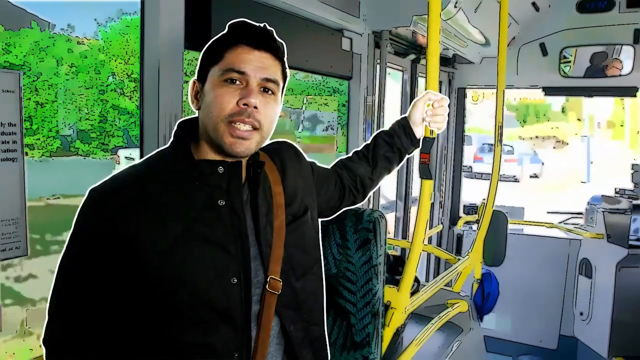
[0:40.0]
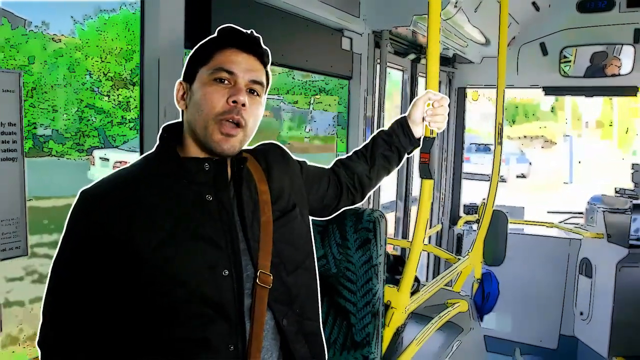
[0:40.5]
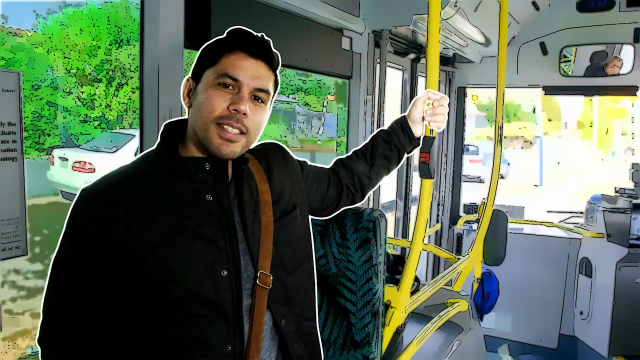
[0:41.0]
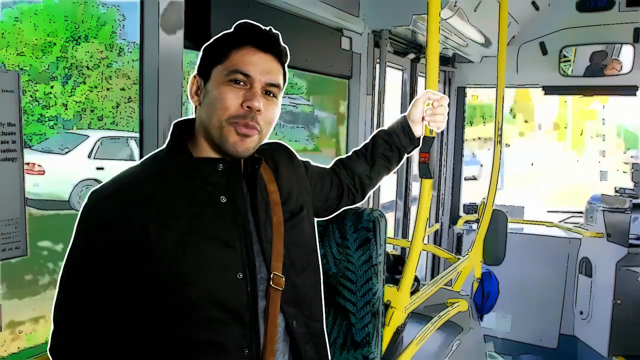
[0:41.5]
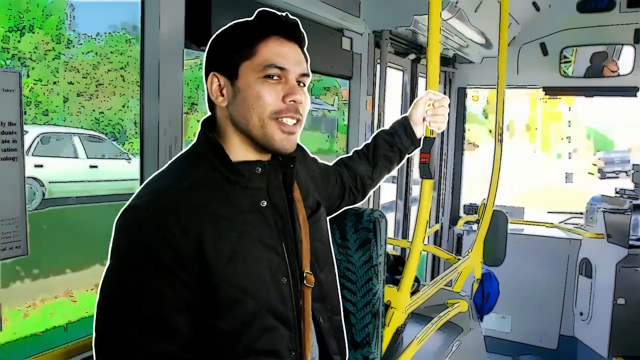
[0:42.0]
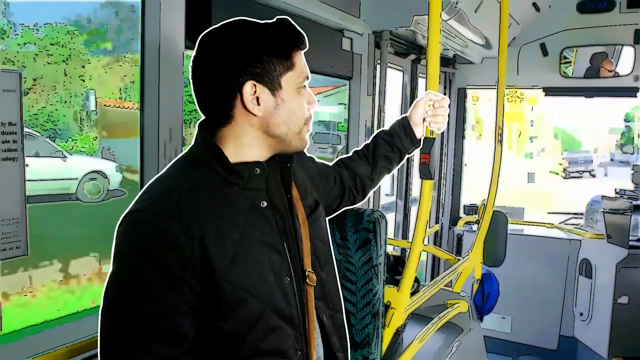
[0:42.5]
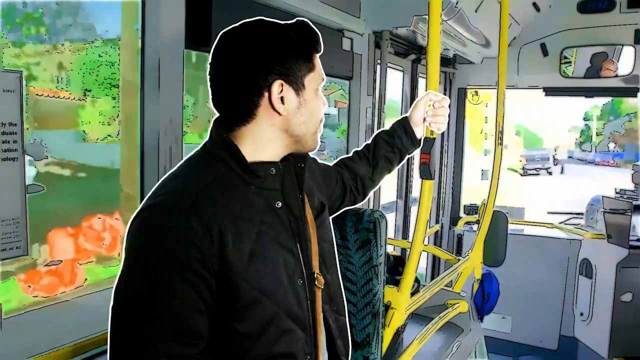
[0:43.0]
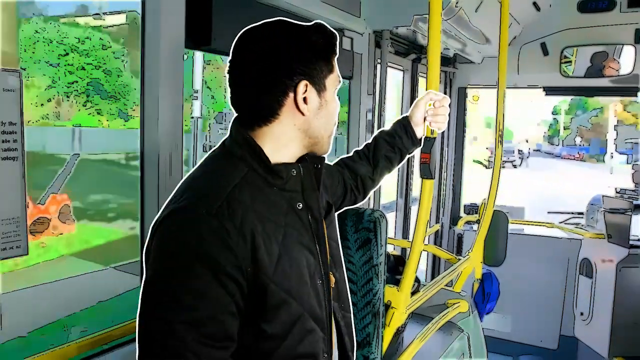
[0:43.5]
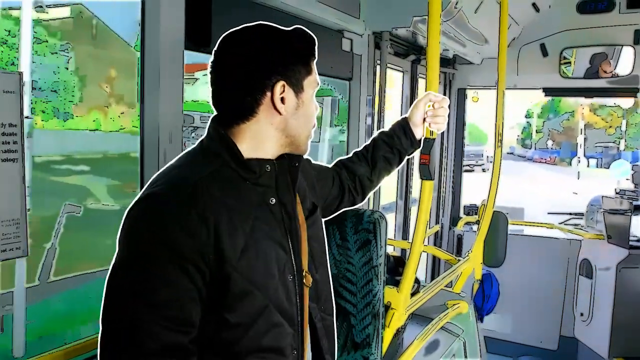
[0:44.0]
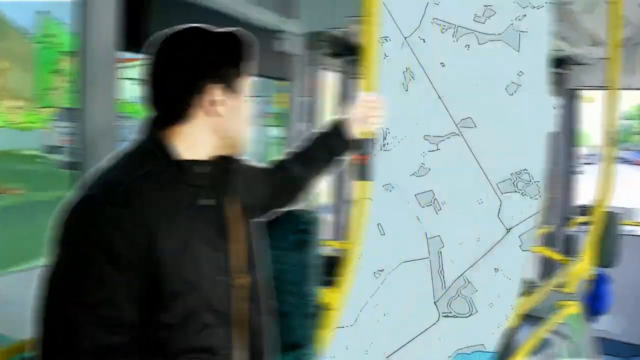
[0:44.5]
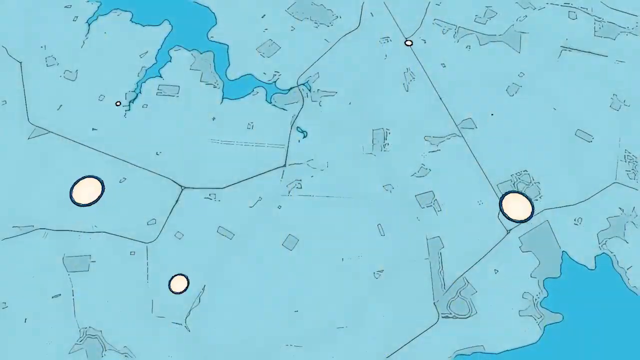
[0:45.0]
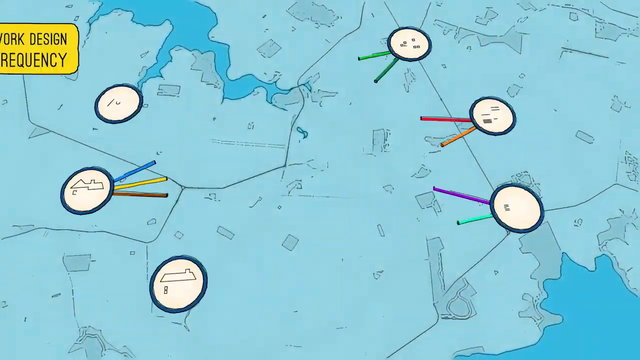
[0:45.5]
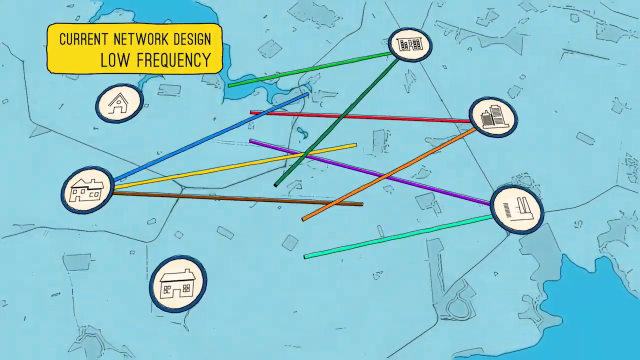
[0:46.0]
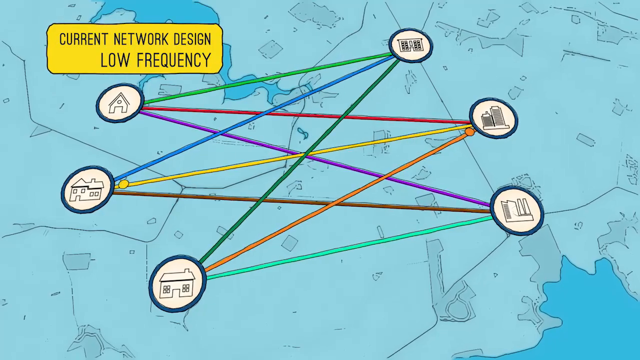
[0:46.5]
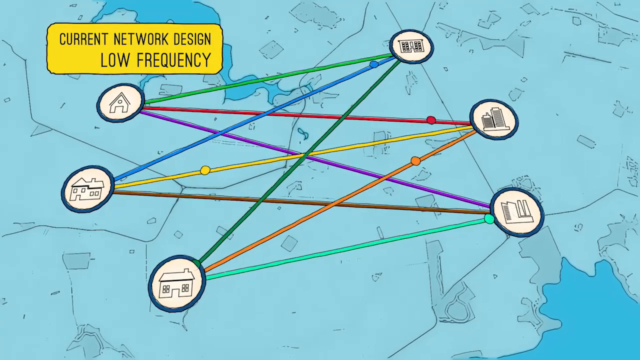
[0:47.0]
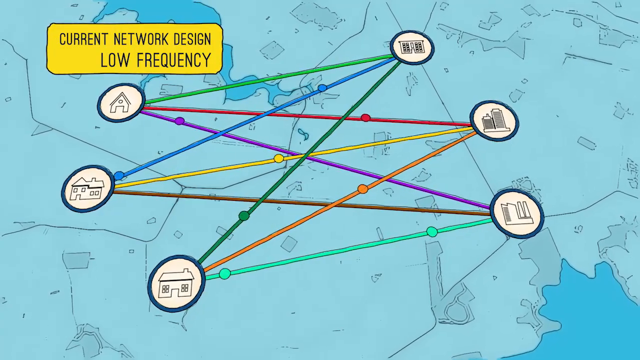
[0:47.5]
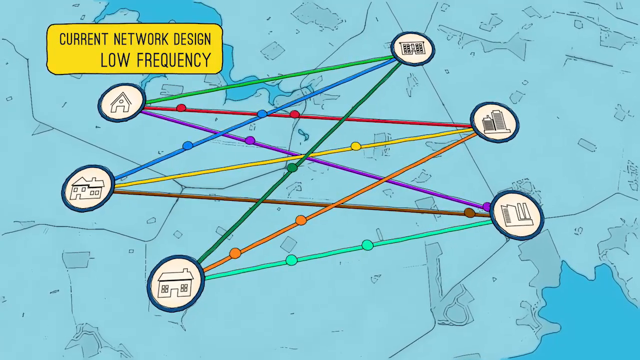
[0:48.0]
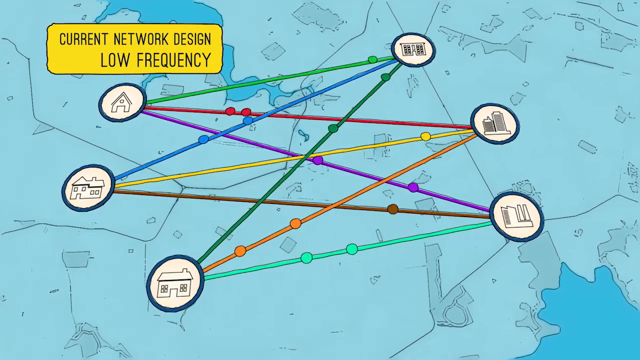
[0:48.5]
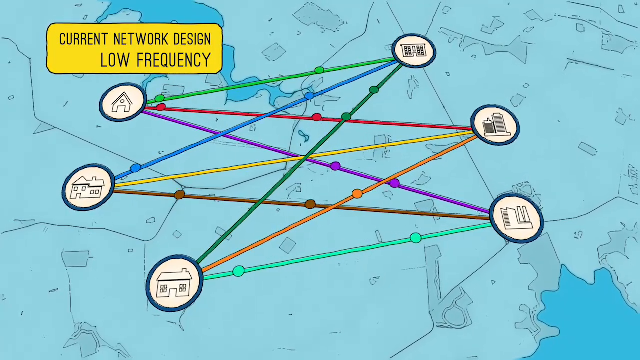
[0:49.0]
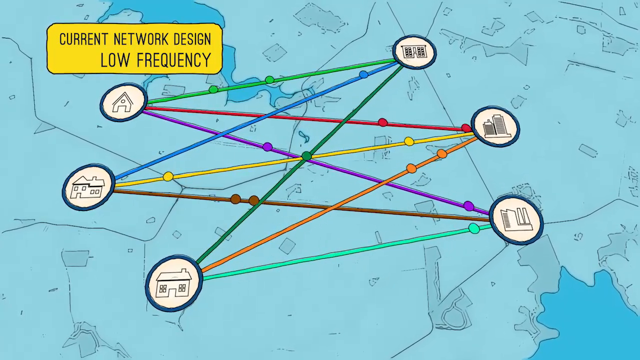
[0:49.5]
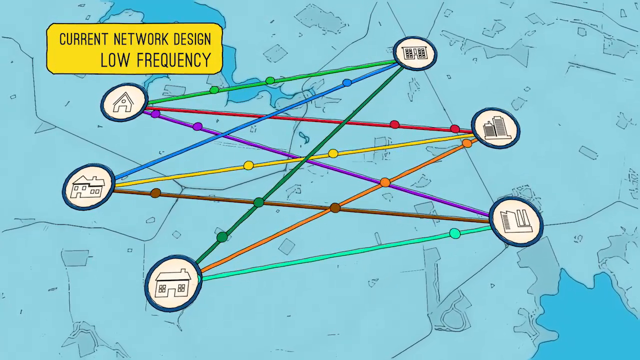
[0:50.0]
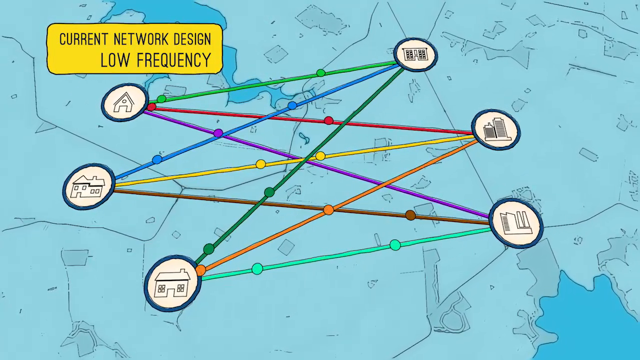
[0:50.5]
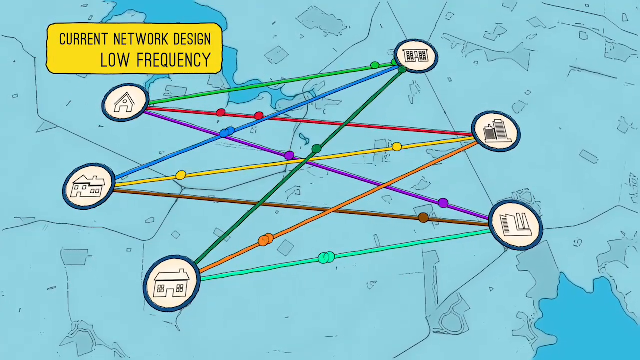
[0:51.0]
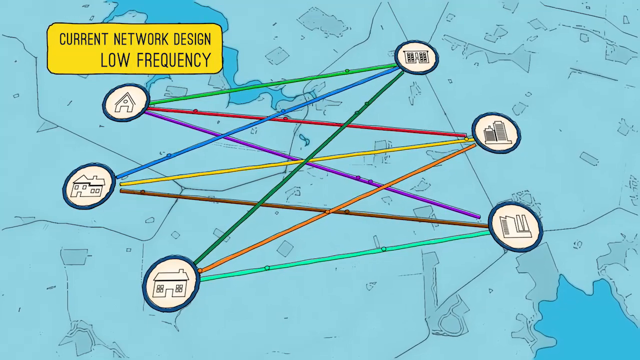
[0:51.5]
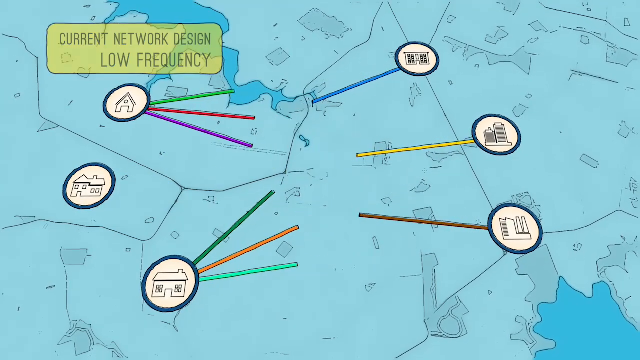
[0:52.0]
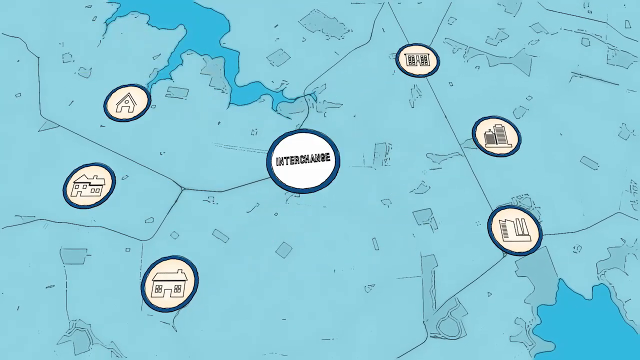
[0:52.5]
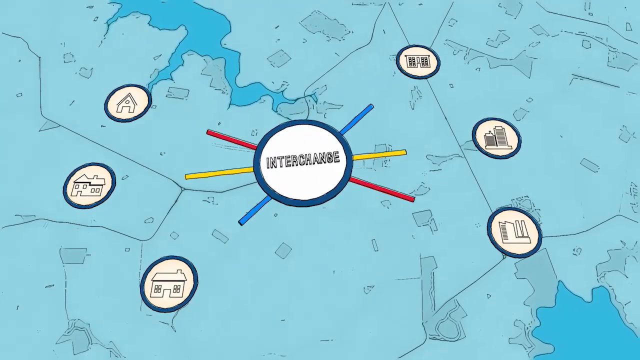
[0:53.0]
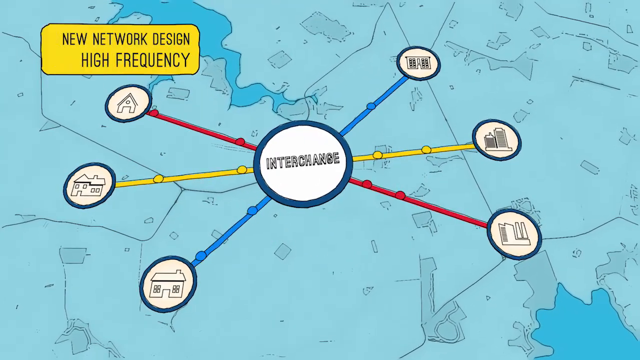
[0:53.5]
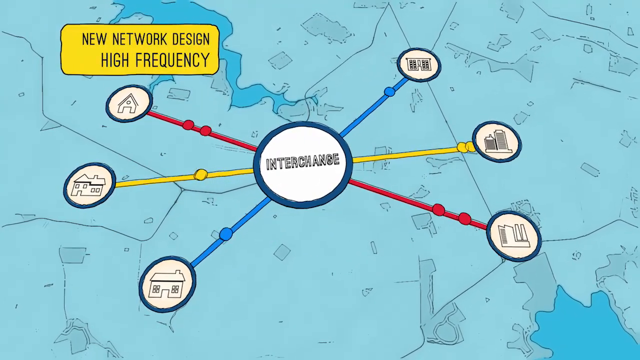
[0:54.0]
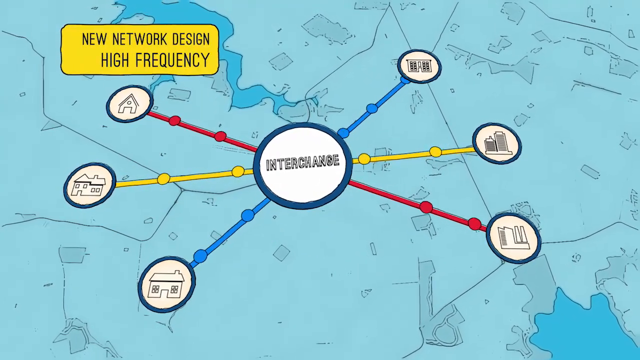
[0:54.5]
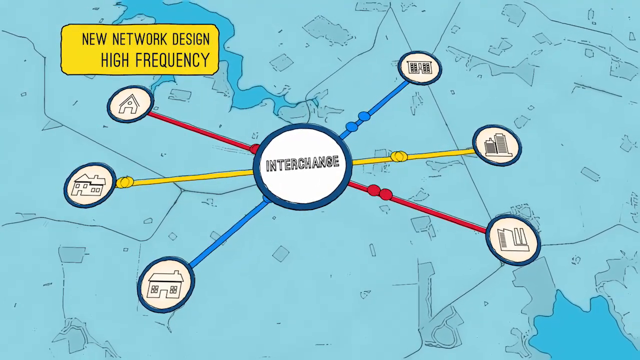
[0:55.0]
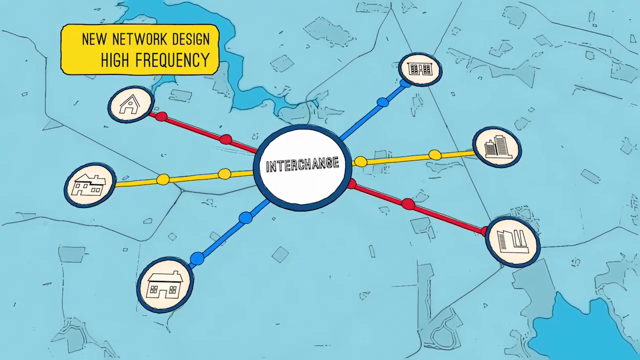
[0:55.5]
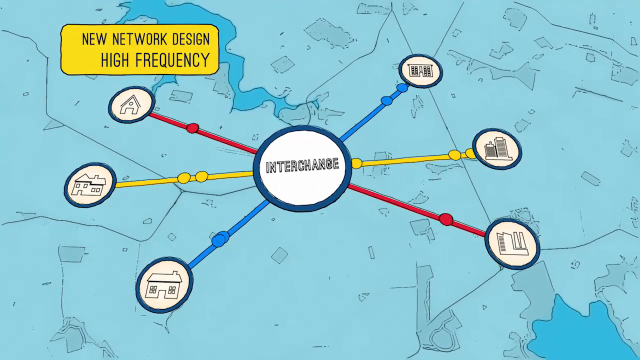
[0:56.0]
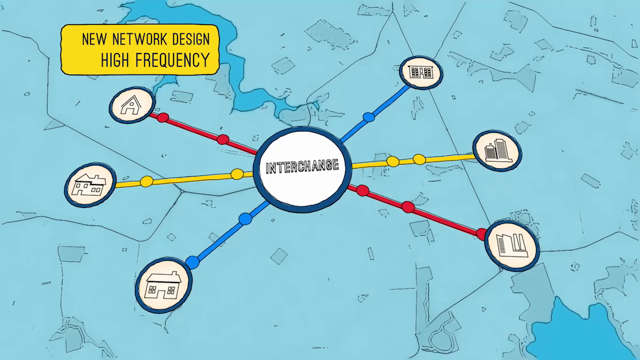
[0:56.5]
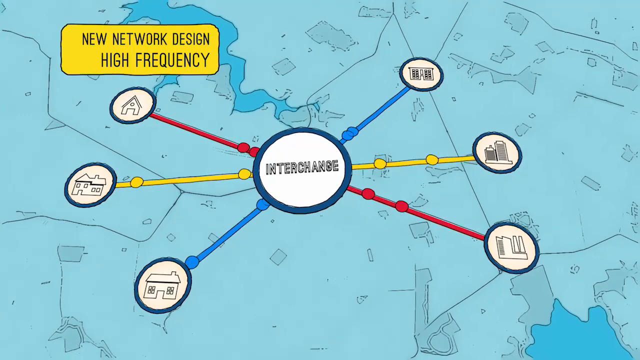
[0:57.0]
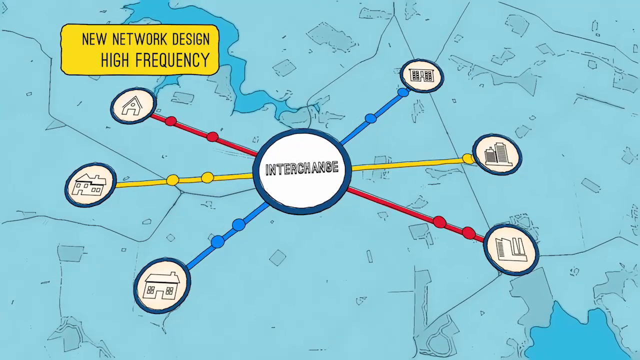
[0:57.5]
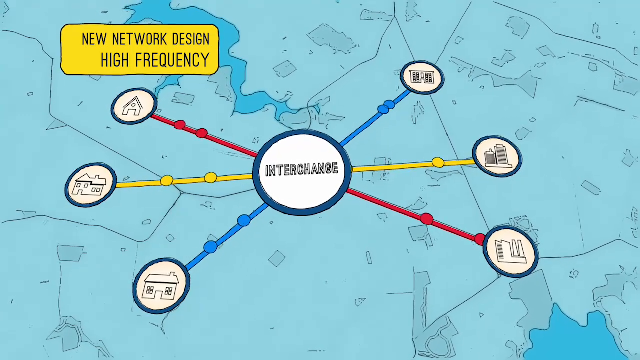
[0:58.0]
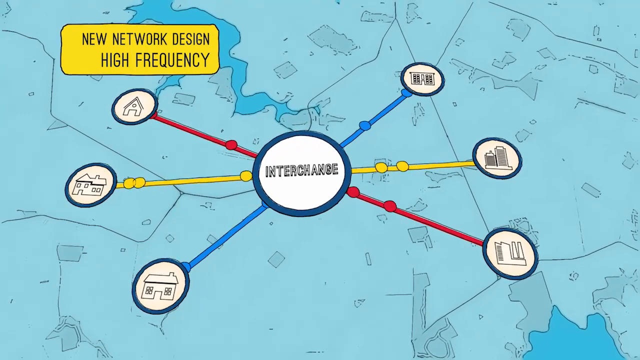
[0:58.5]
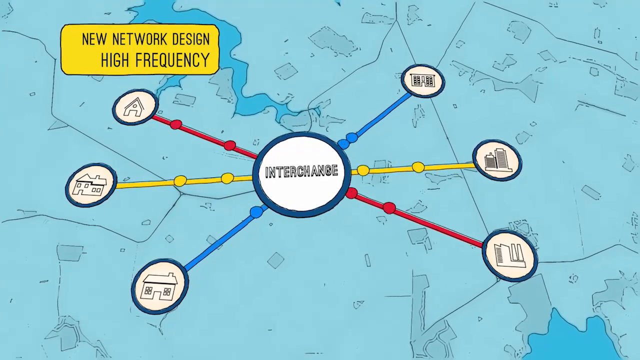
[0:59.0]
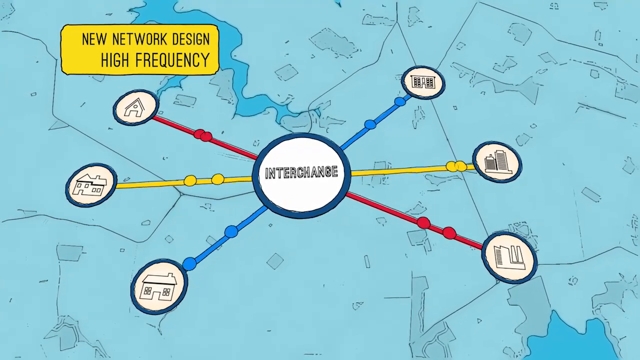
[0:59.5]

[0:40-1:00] The man in the white outline stands in the bus, holding the yellow handrail and talking to the camera as the bus sets off. He gently moves forwards, then looks around the front of the bus. The screen splits and an aerial shot of a map shows the current network design, low frequency. The map shows an area in blue, with areas of water highlighted in a darker blue. There are six circles: one with a graphic of a house, one with a larger house, the third with a middle-sized house, the fourth with an industrial building, the fifth with a couple of high-rise buildings, and the sixth with what looks like a multi-storey office. Each circle has three lines coming from it in varying colours, which interconnect with one of the circles on the opposite side. Round dots of the same colour as each line appear and move along it, sometimes coming from opposite directions and crossing in the middle, and this repeats. Then the lines disappear and a large circle containing "interchange" comes in between the two rows of circles. Three coloured lines, one blue, one yellow and one red, come out of each side of this circle and go towards one of the circles on each side, connecting them; this is the new network design with high frequency. Circles of the same colours as the lines cross multiple times, all heading towards the interchange in the centre and then away from it.